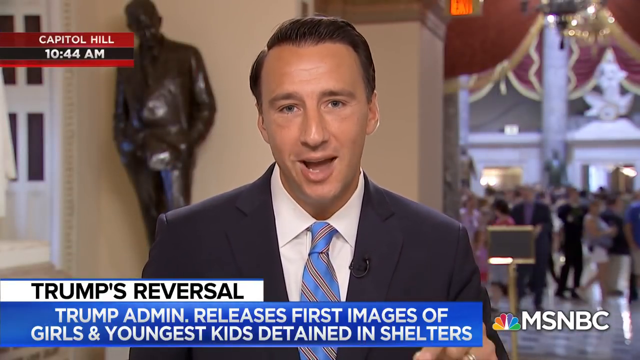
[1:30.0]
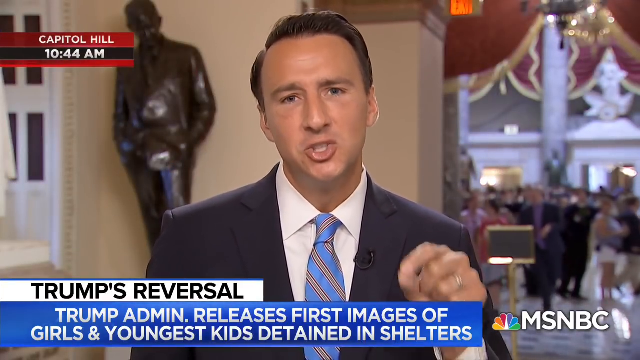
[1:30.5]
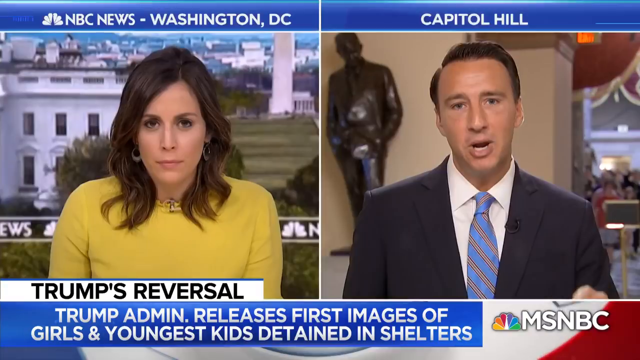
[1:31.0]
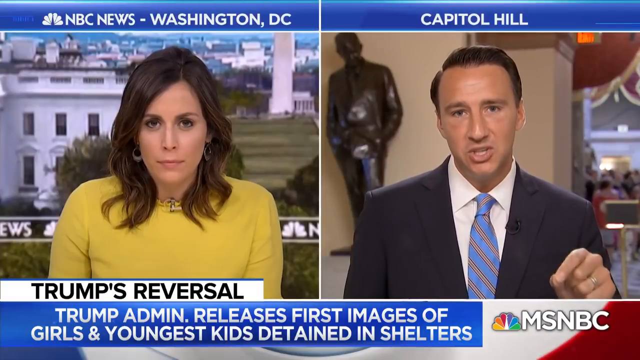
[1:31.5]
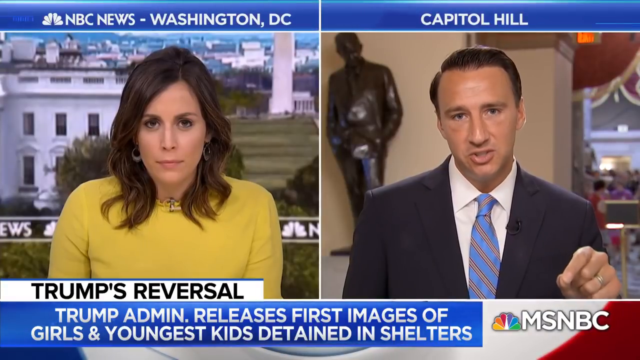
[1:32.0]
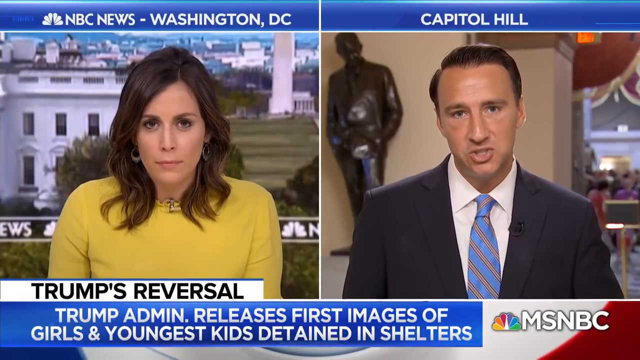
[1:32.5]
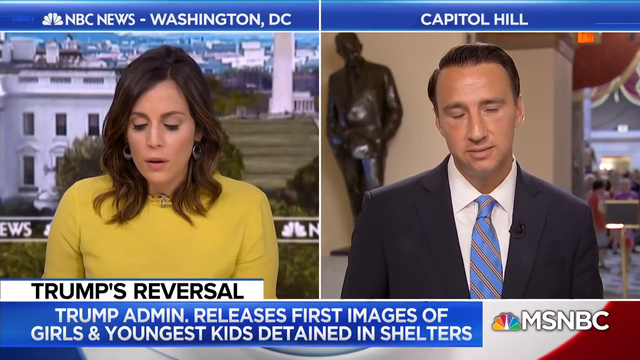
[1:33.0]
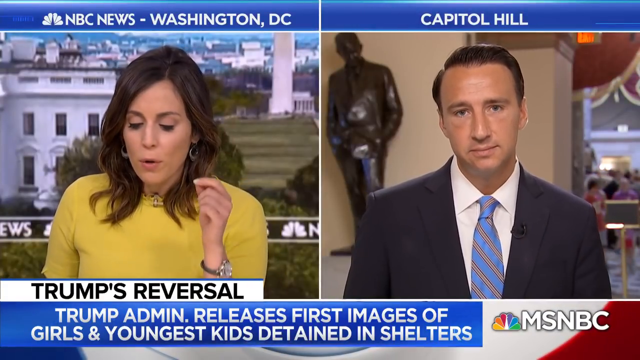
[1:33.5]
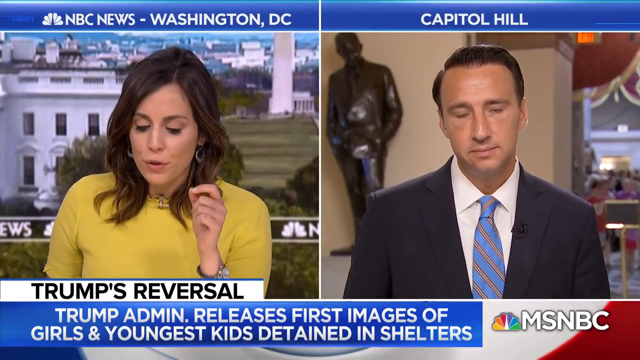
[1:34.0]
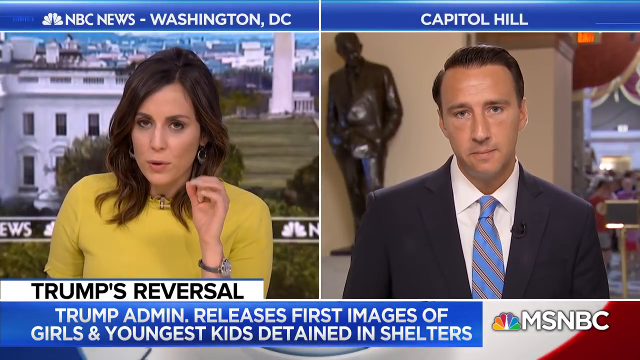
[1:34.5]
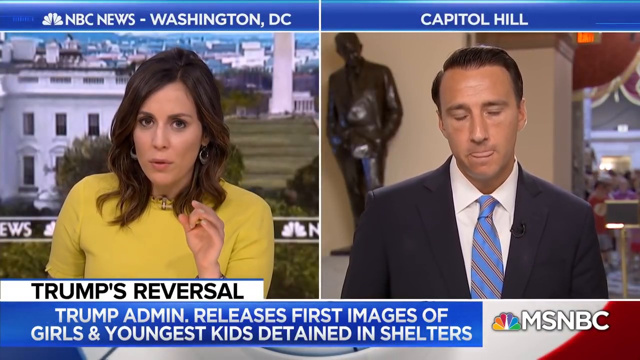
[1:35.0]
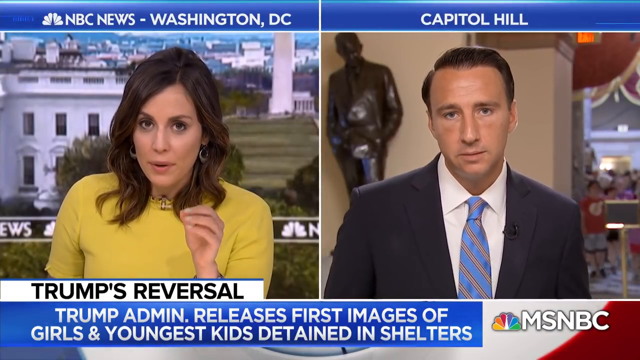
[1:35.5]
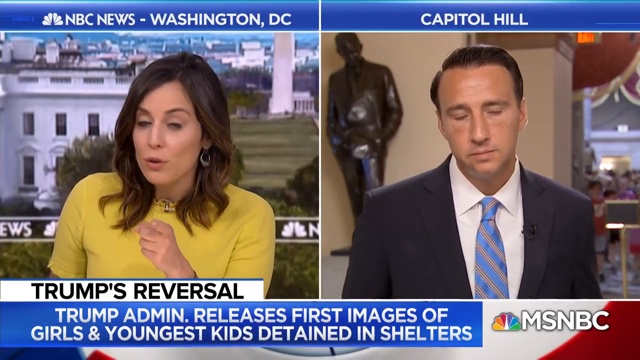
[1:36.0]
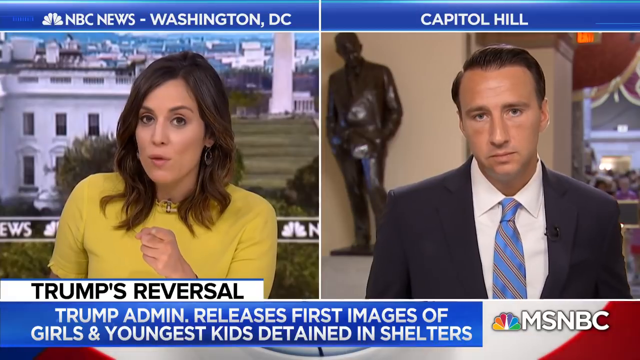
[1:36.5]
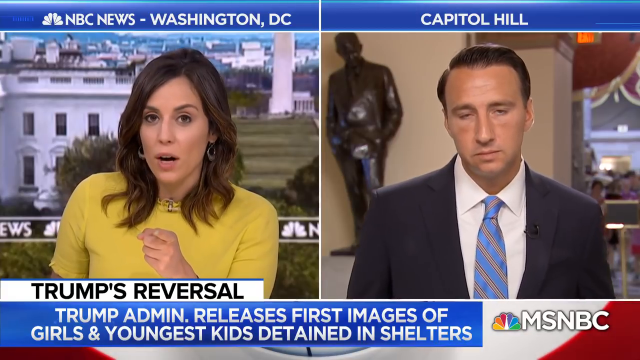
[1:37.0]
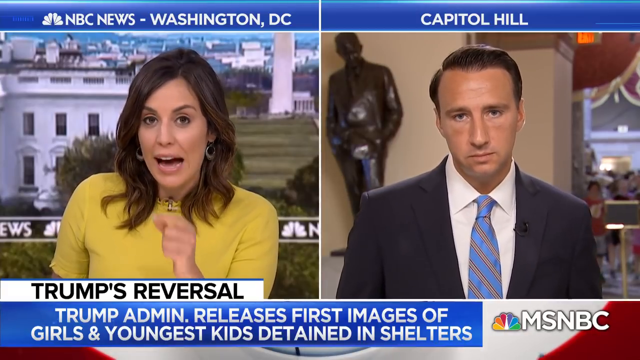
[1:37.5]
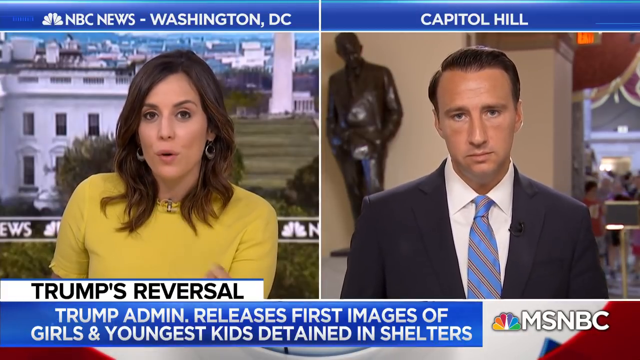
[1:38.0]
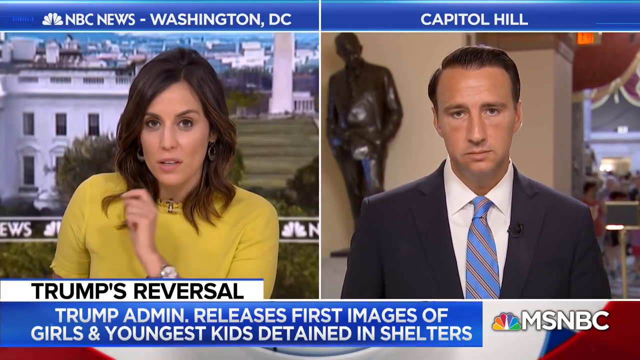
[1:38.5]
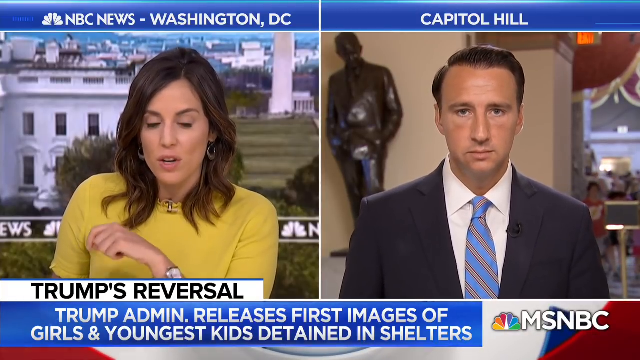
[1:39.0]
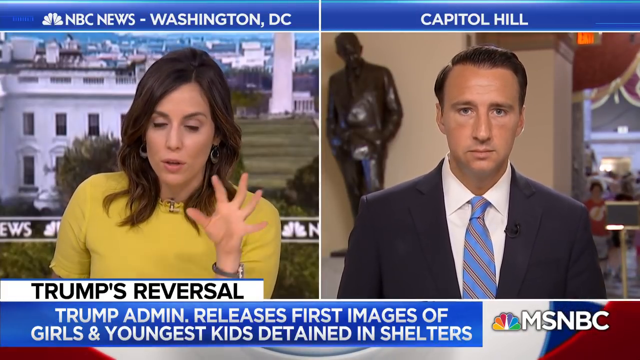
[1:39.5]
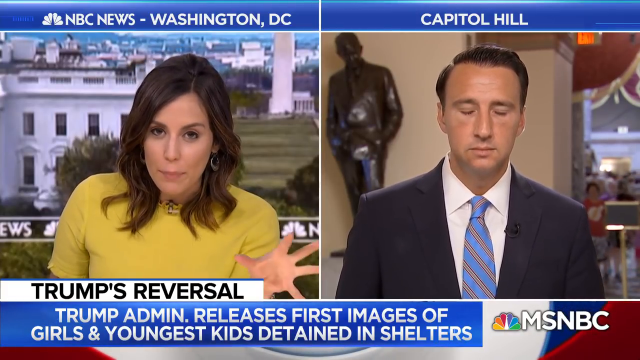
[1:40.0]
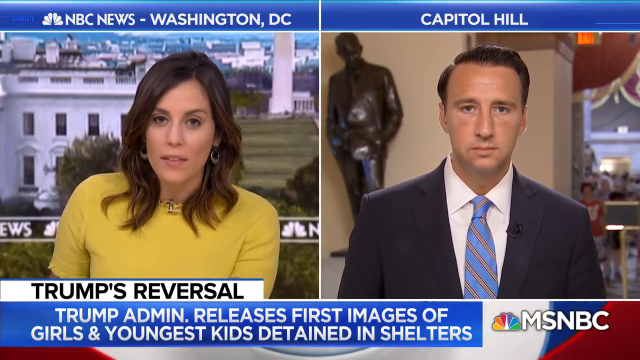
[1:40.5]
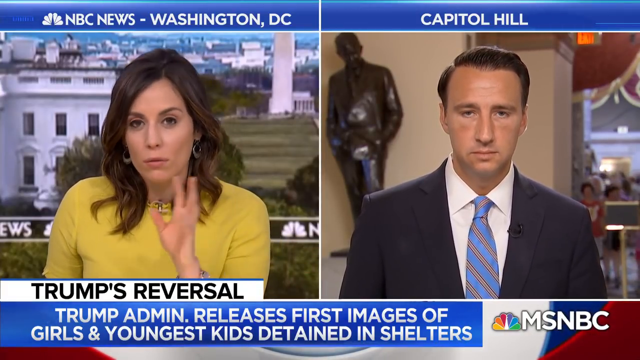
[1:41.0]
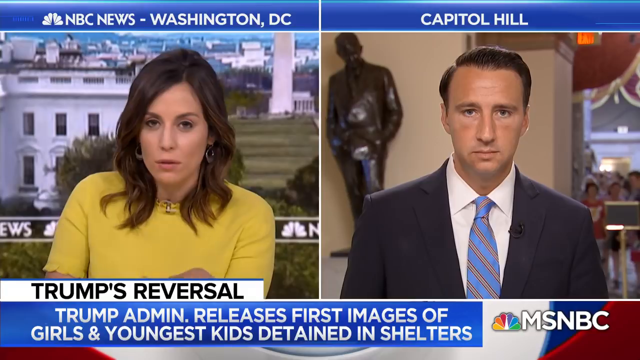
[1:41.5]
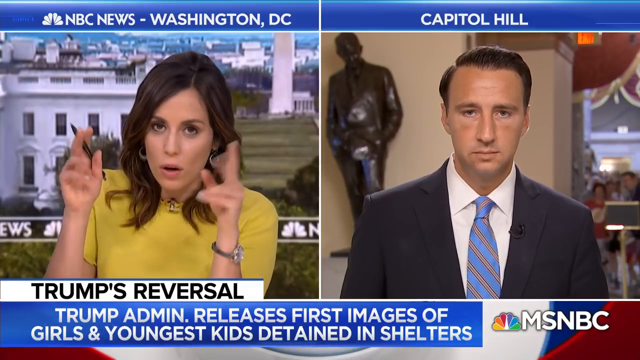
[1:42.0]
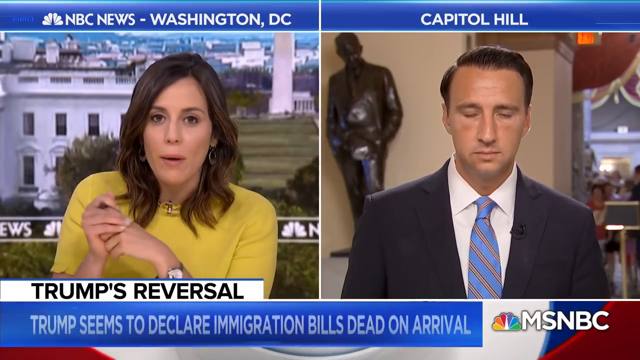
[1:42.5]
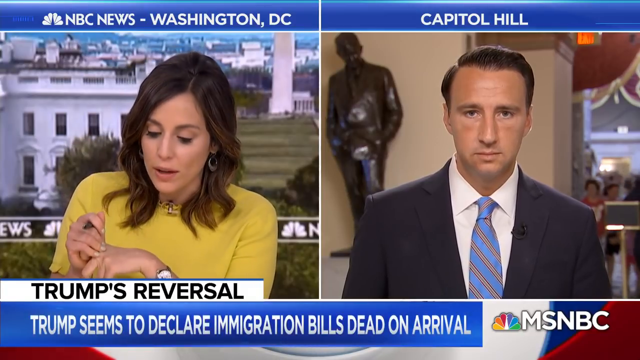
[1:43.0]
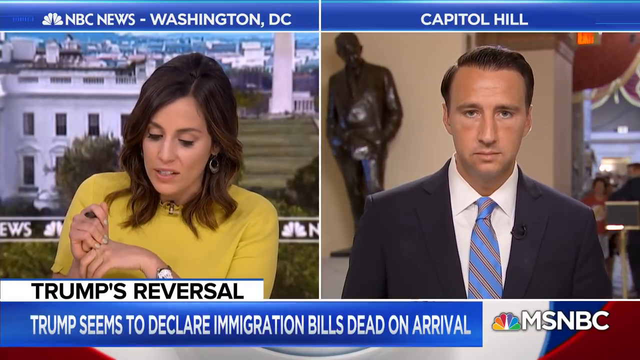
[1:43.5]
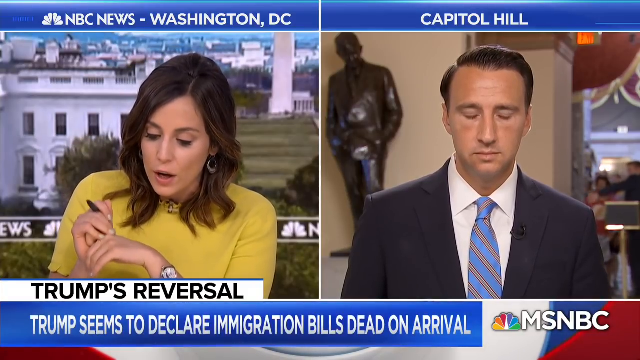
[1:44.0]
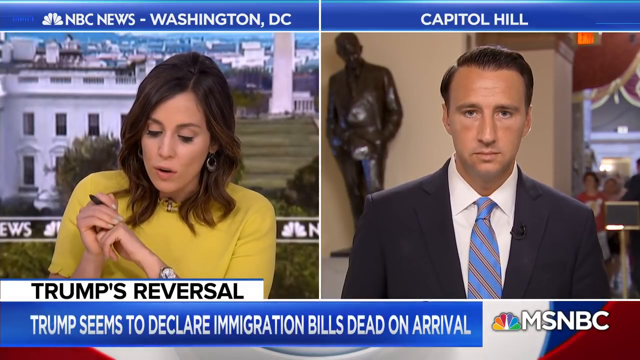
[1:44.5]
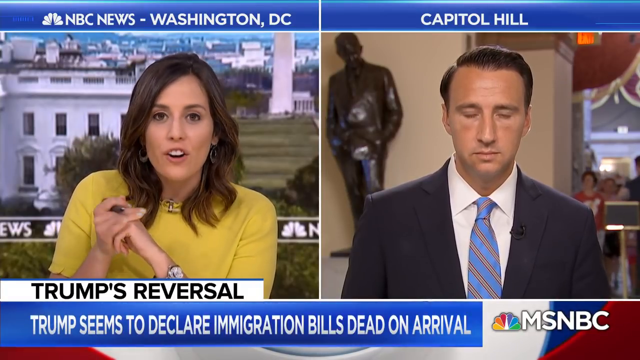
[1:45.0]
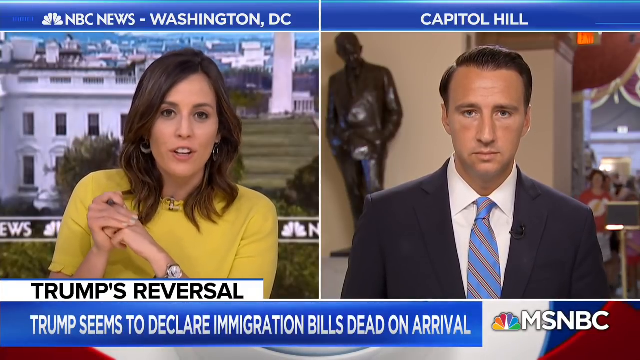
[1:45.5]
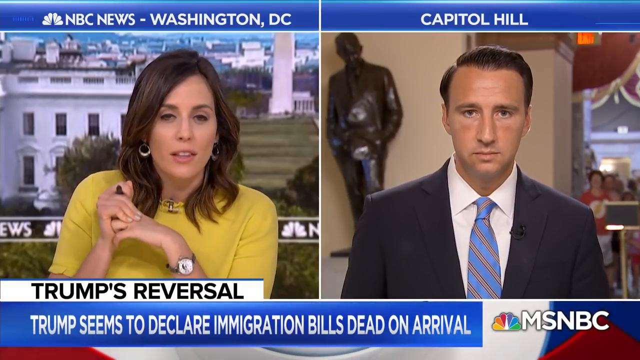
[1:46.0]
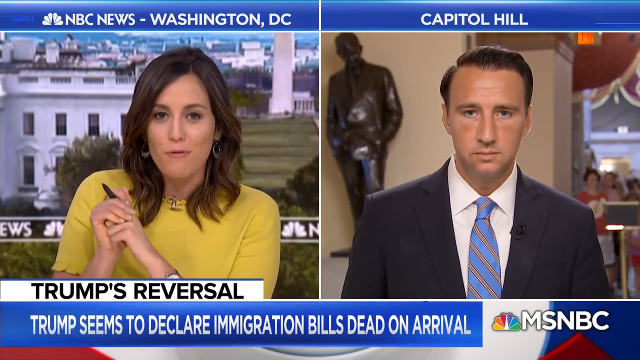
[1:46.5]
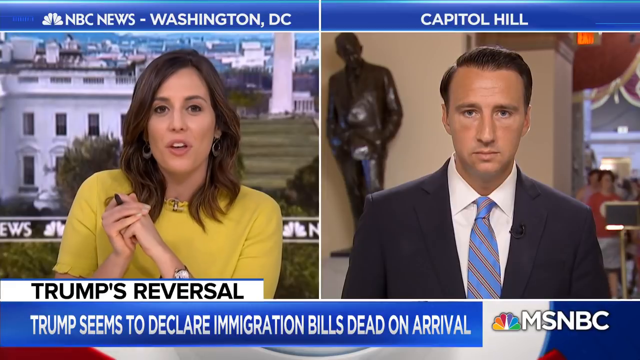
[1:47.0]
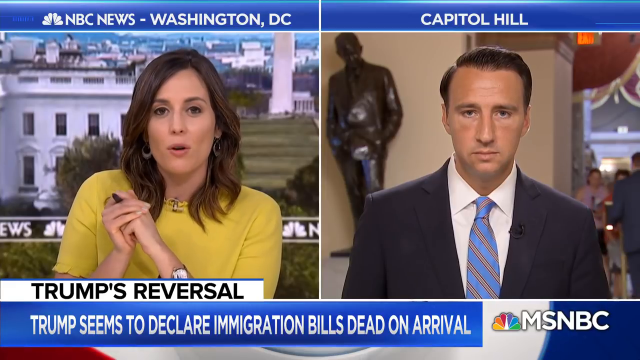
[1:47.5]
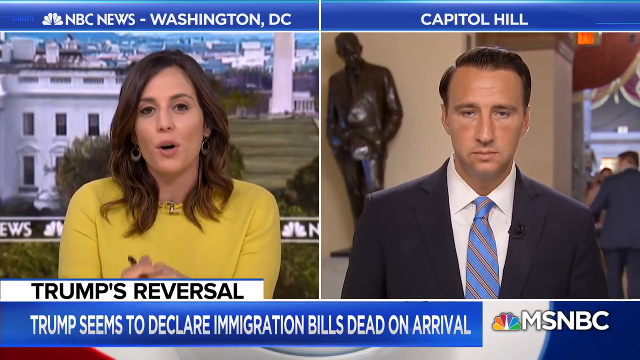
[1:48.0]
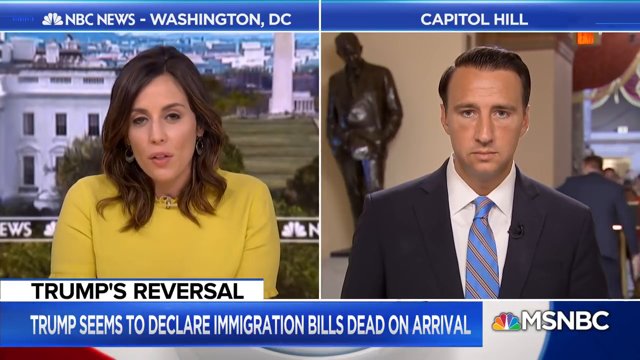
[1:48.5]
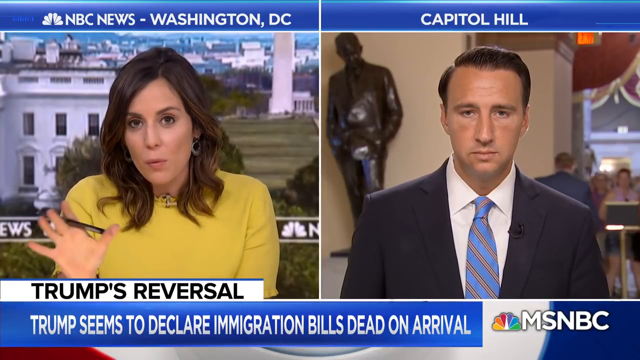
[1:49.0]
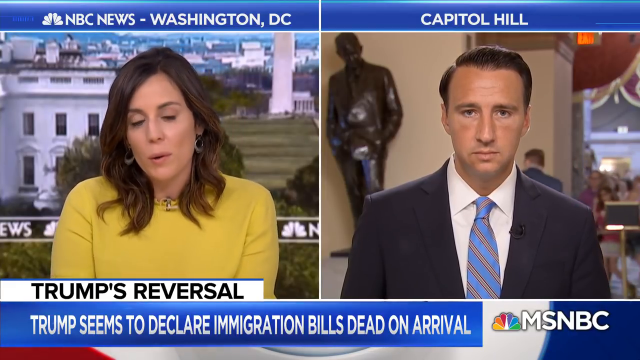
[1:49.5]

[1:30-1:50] Representative Costello looks angry. He gestures with his left hand, pointing with his forefinger to punctuate each point, moves his head forward and answers more rapidly, looking more agitated. The video moves back to the 50-50 split screen with the news host Hallie Jackson on the left. She looks straight ahead, her nostrils flaring a little, perhaps agitated. She asks another question, holding up her left hand with her elbow resting on the desk, makes a circular pattern with her forefinger and thumb, and then points toward the camera. She makes gestures like wiping a screen, then quotation-mark gestures, and holds her hands together while still holding the pen or marker in her right hand, almost as if pushing back. She takes a deep breath and lets it out. The video then returns to him, his mouth open, and the news crawl underneath reads "Trump seems to declare immigration bills dead on arrival".